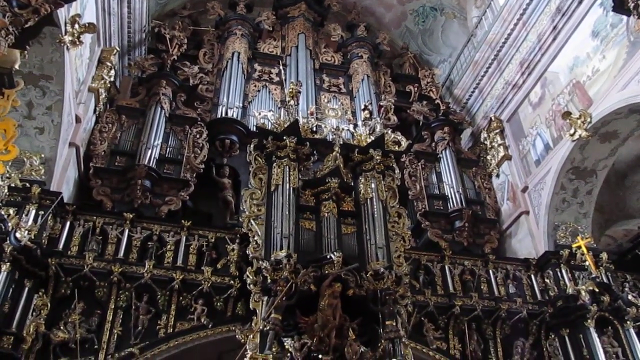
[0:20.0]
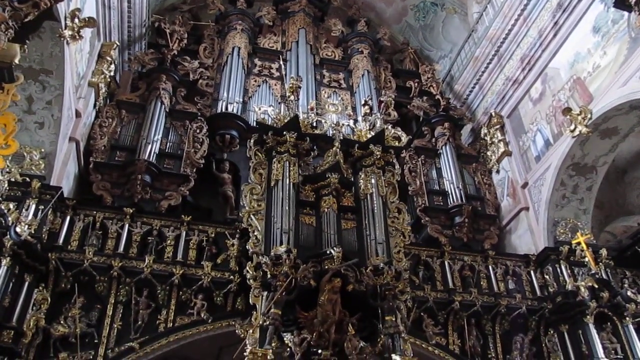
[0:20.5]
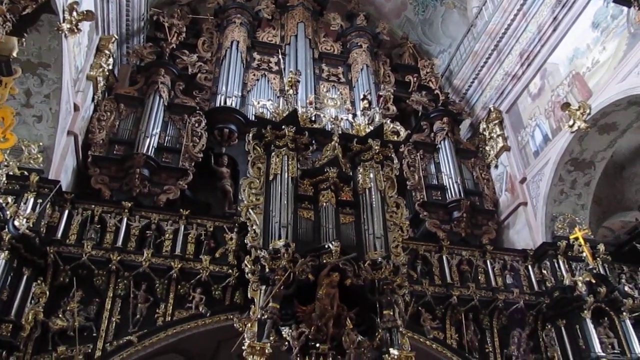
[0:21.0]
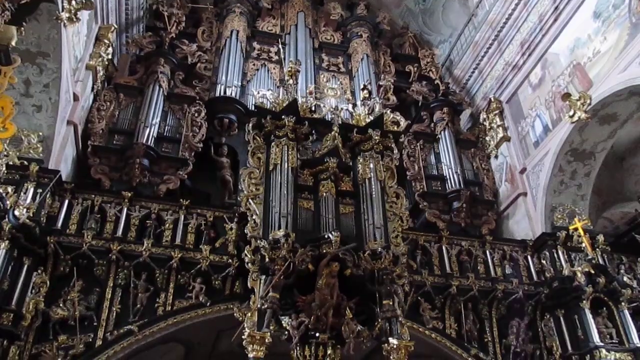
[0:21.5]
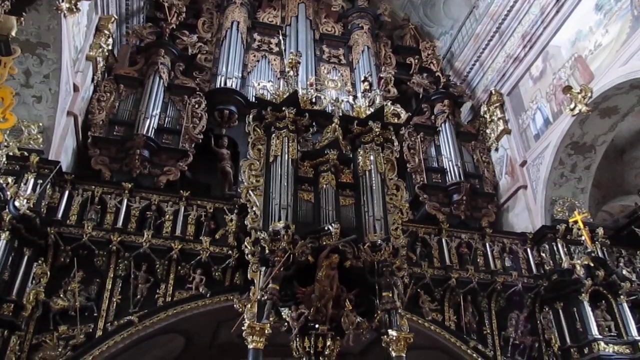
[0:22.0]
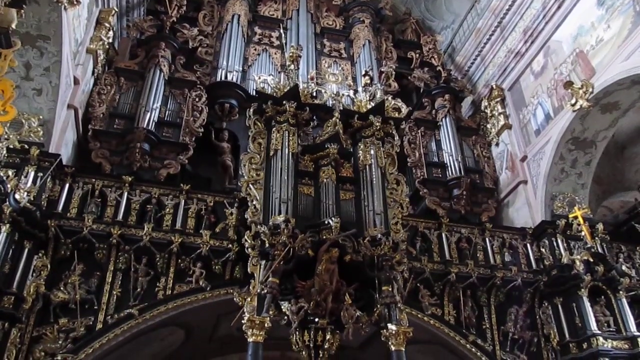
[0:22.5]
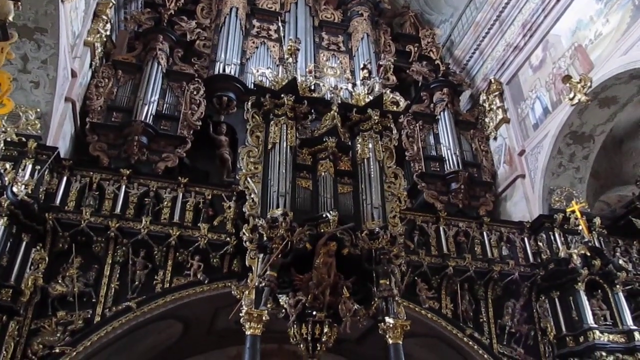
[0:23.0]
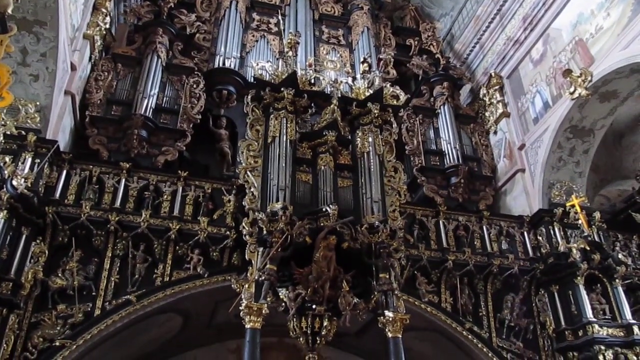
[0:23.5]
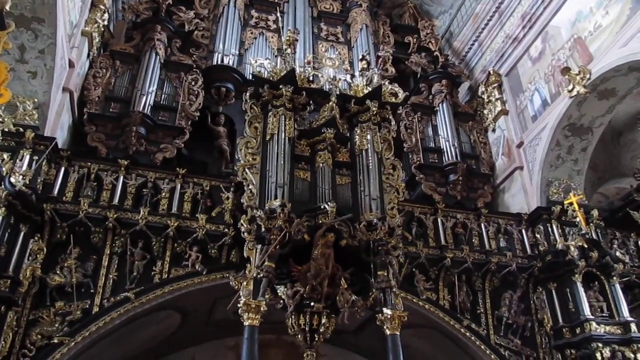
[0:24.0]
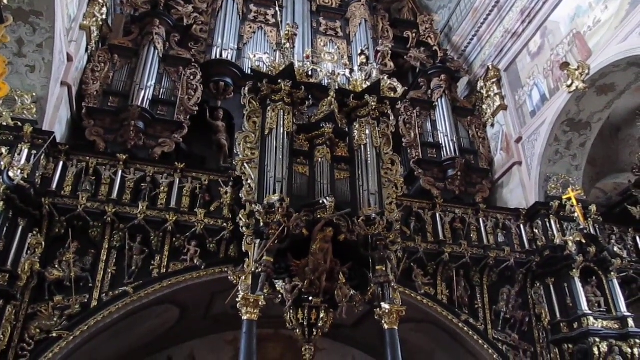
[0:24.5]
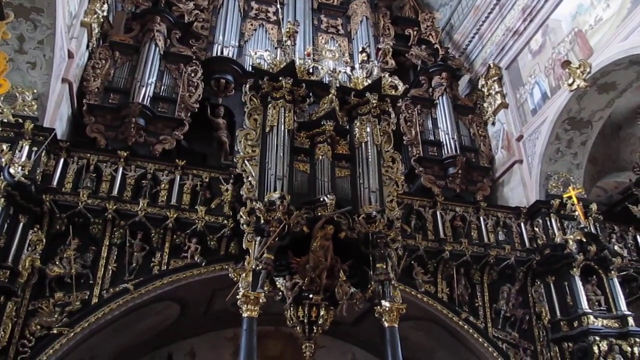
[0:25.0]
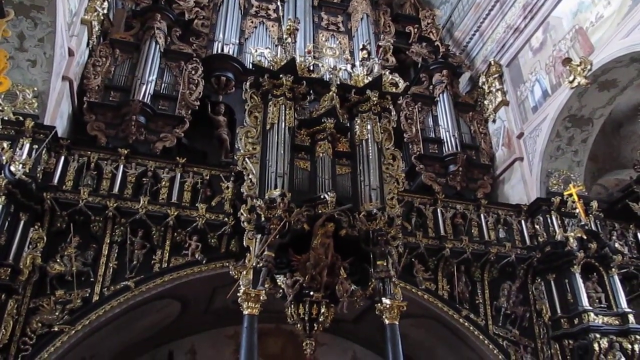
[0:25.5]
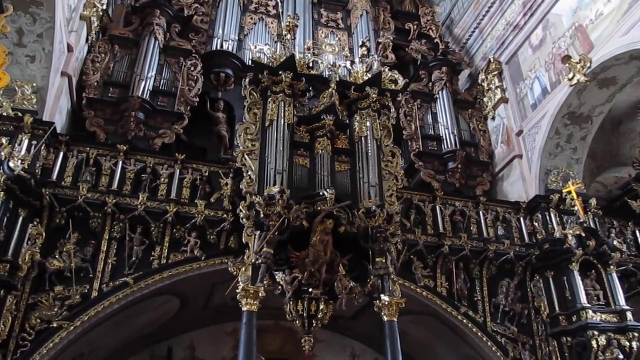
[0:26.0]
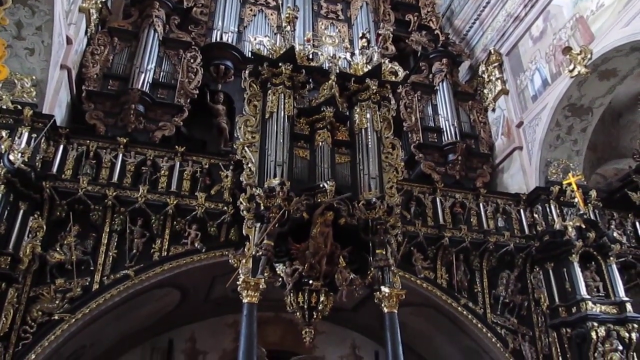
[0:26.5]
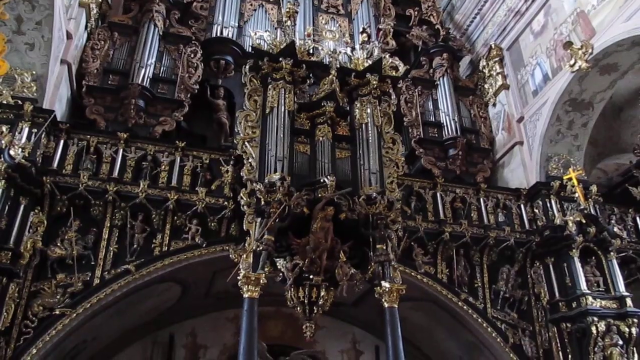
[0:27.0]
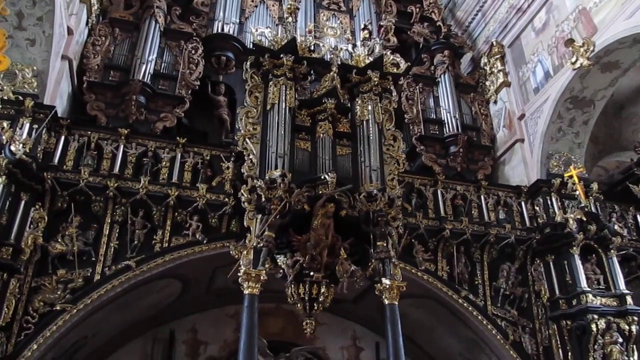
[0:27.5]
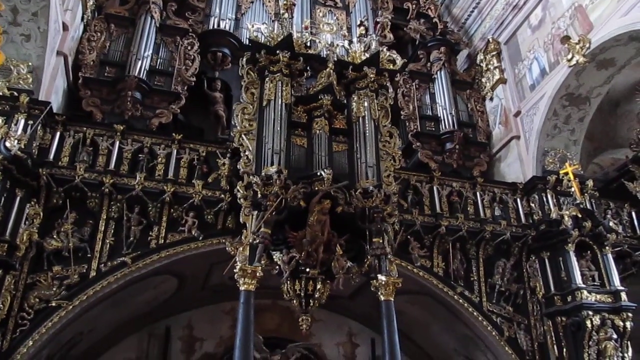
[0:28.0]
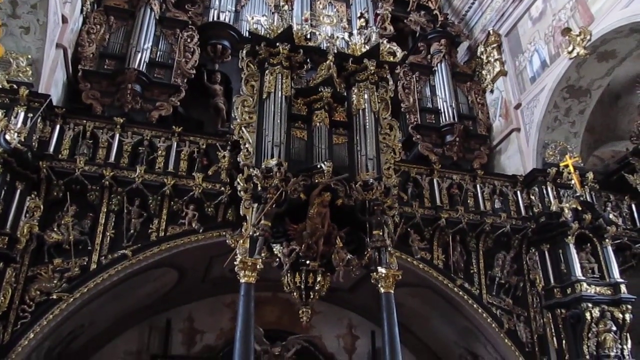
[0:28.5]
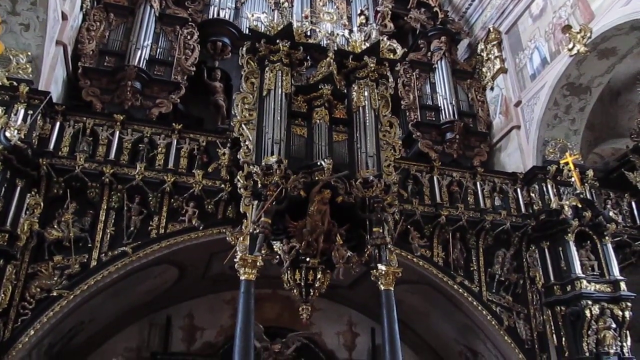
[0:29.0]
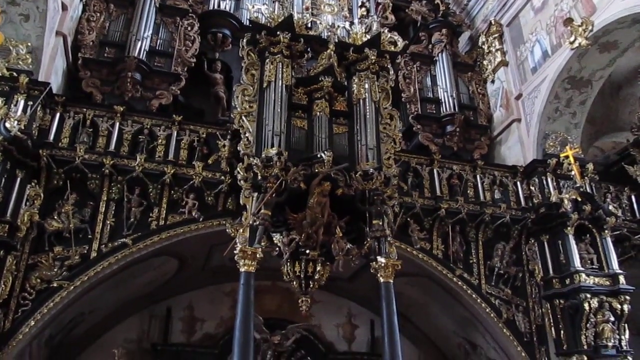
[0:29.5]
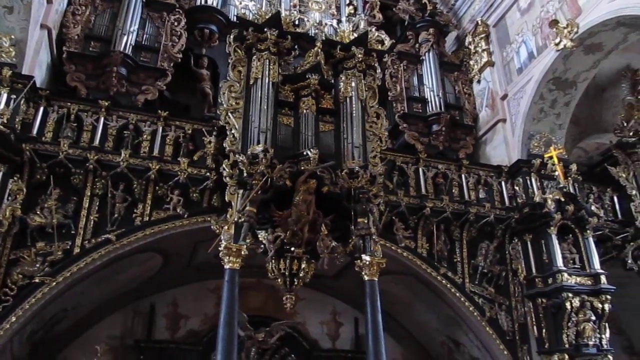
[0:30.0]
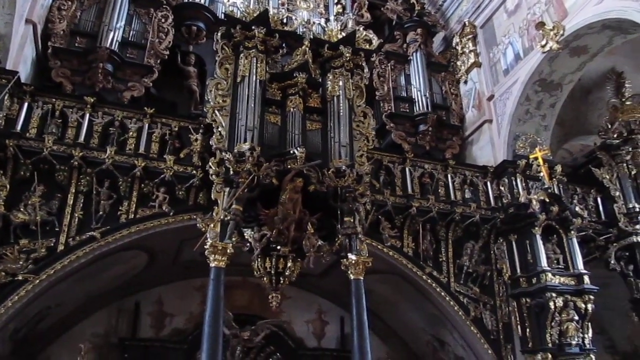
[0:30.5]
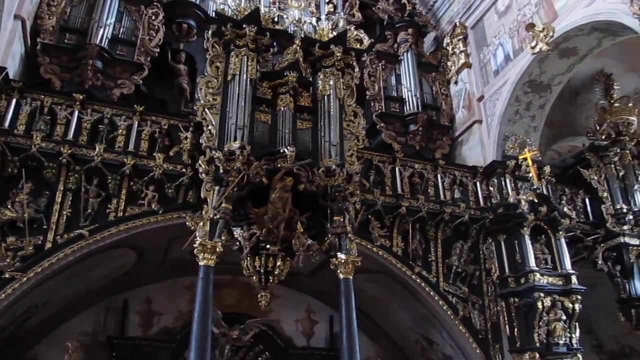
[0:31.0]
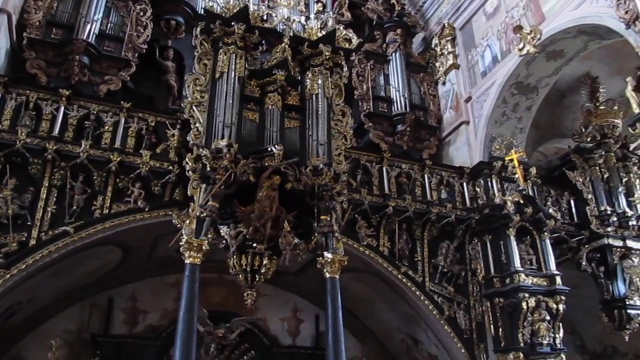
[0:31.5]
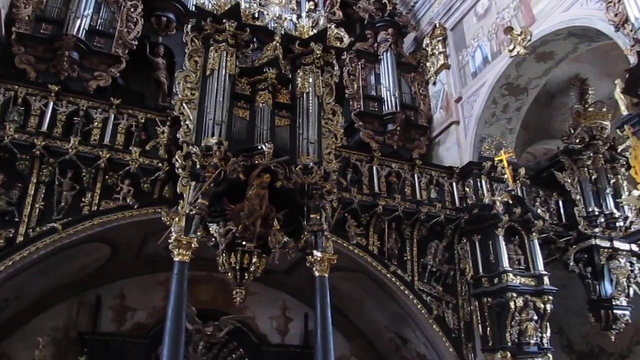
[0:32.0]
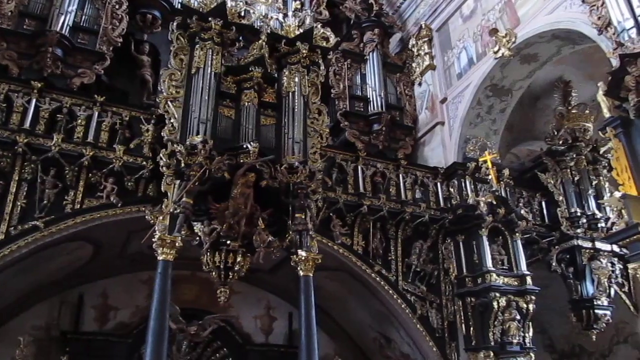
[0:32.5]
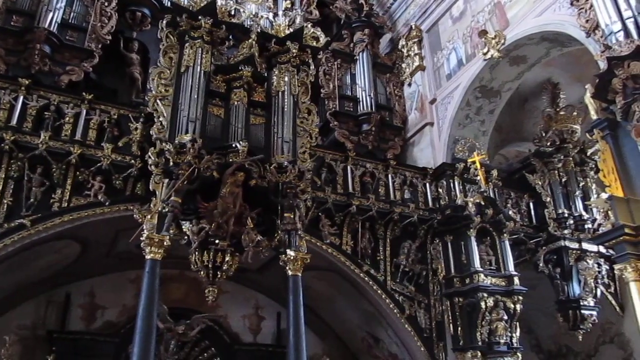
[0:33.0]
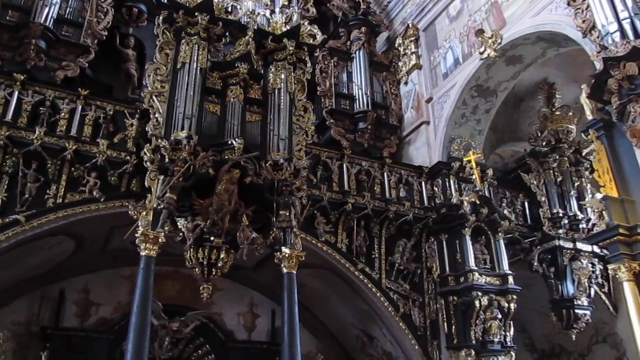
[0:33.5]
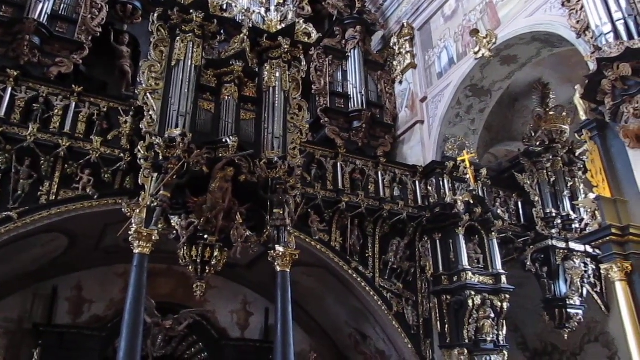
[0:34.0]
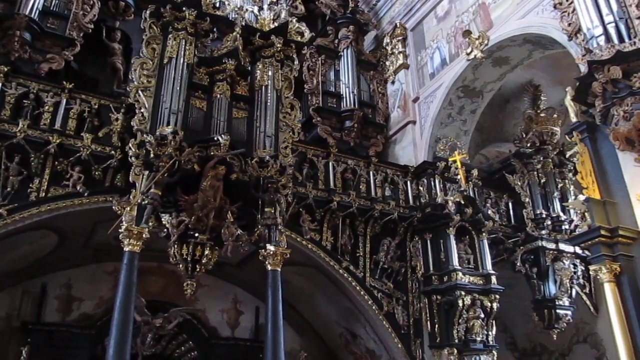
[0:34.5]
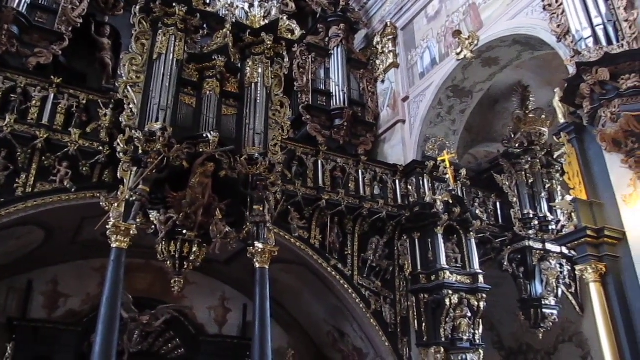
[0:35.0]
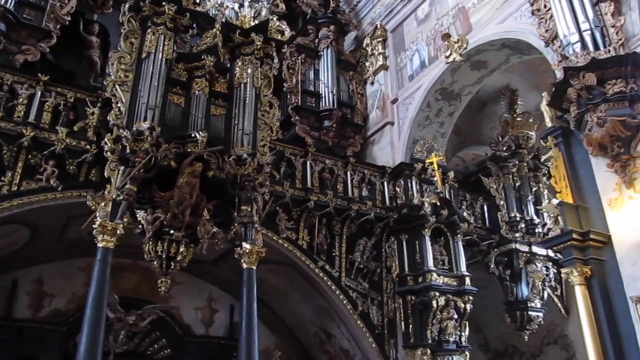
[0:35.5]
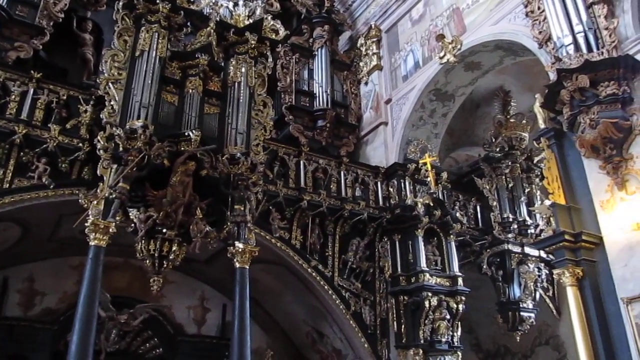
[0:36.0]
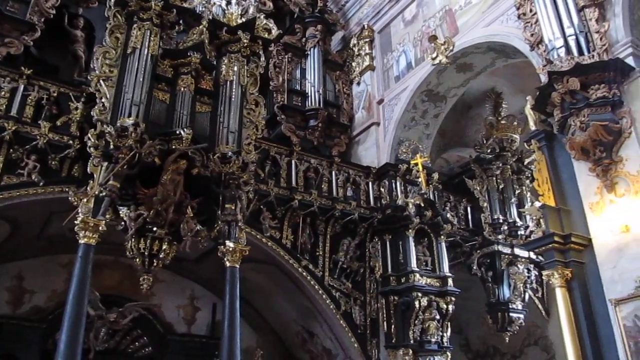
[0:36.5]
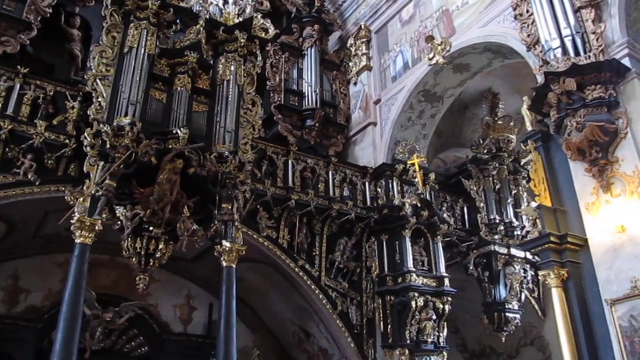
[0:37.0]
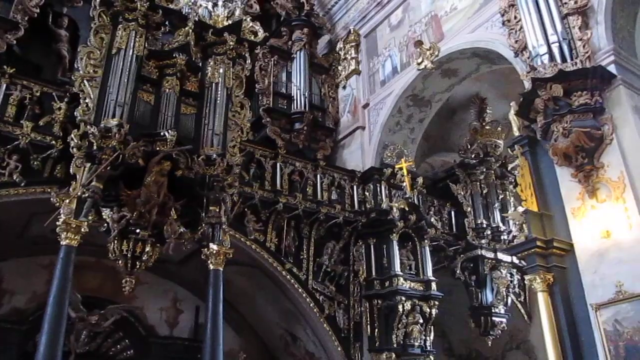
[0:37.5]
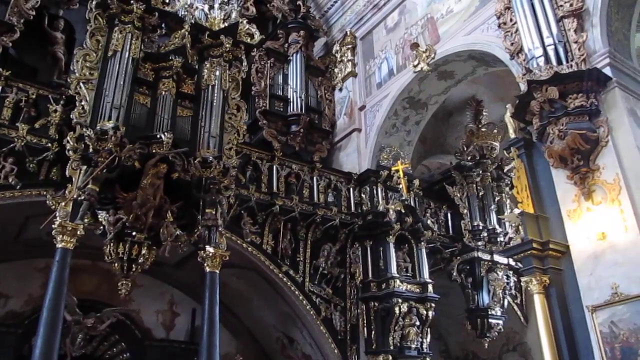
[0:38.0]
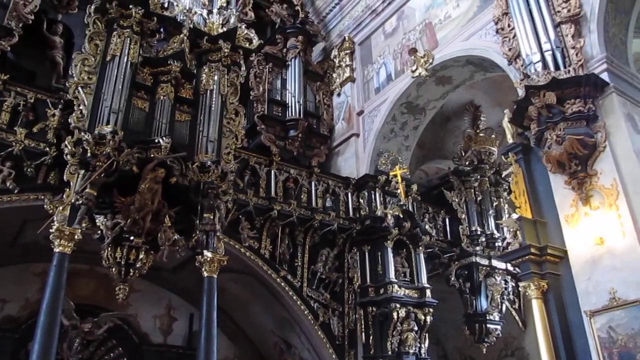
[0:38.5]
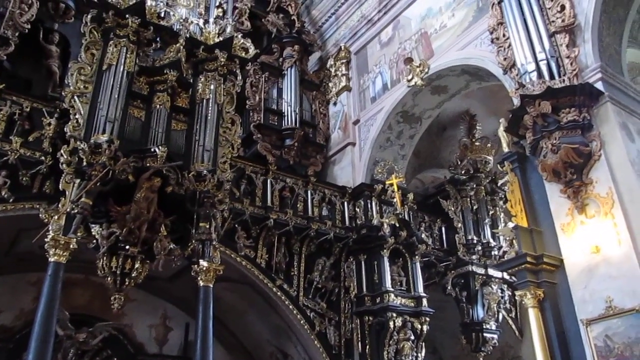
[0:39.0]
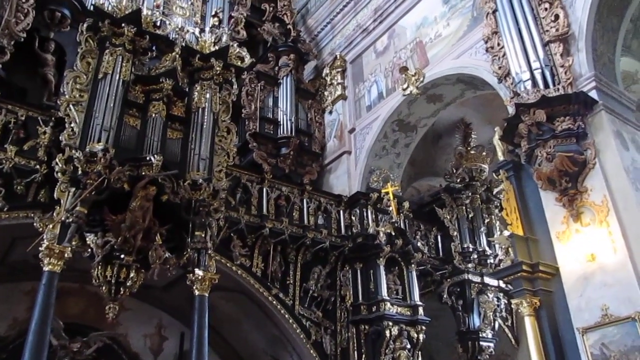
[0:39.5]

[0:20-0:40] The altar of the church continues to be shown, with many images of religious figures, as the view moves to the right side. There are many different religious images: some angels and some people, people riding horses, and crosses. The right side is filled with many different sculptures in bronze and gold colors, with some black coloring throughout as well. Figures that look like religious saints or angels are depicted all over the altar. There are also some paintings; in the top right section there is a painting of a group of people. The view, apparently of the altar, is very zoomed in, and the camera moves downward and then shifts toward the right side.